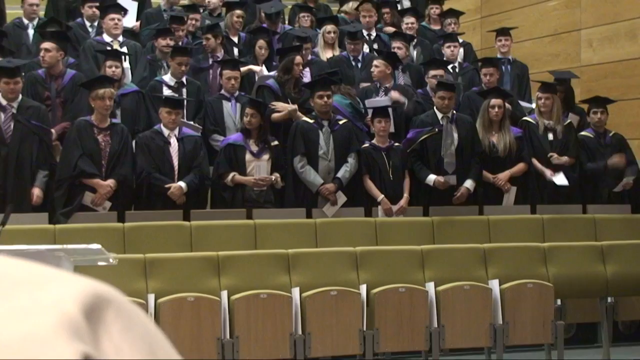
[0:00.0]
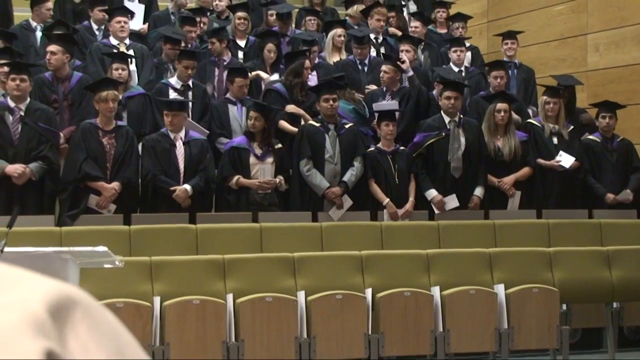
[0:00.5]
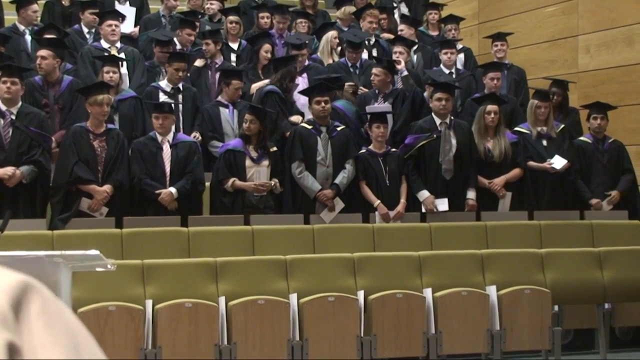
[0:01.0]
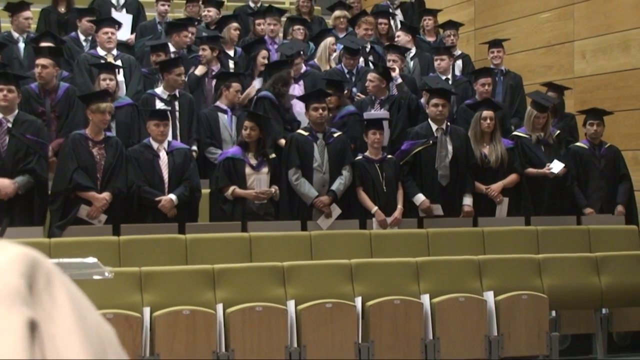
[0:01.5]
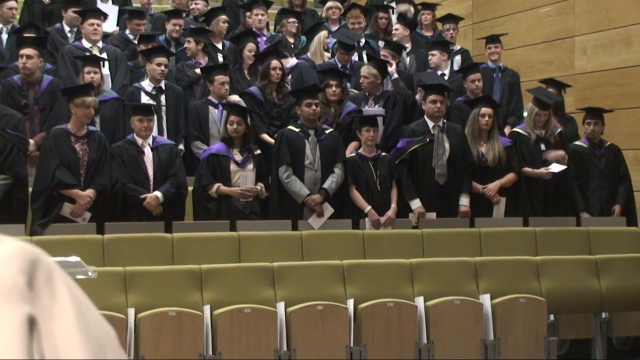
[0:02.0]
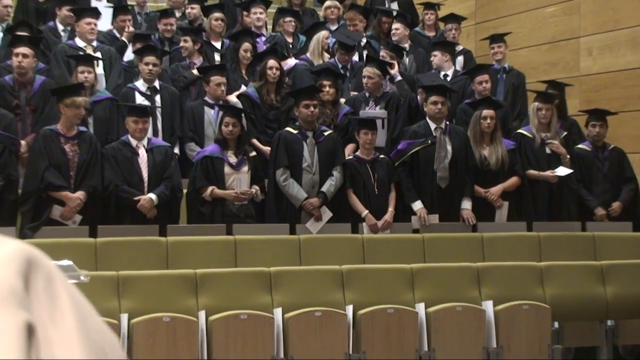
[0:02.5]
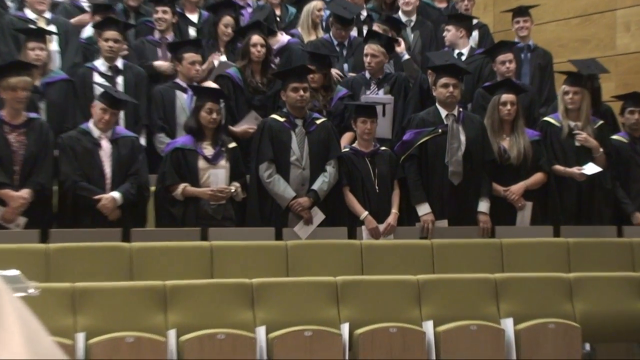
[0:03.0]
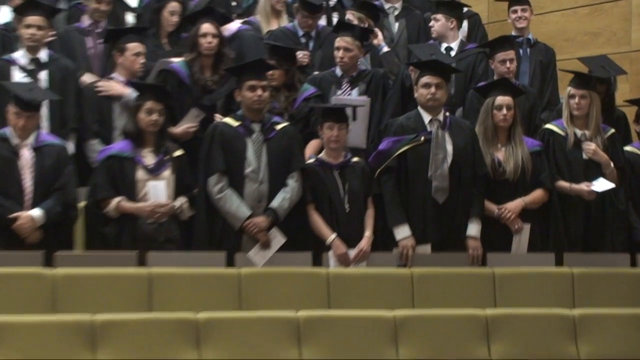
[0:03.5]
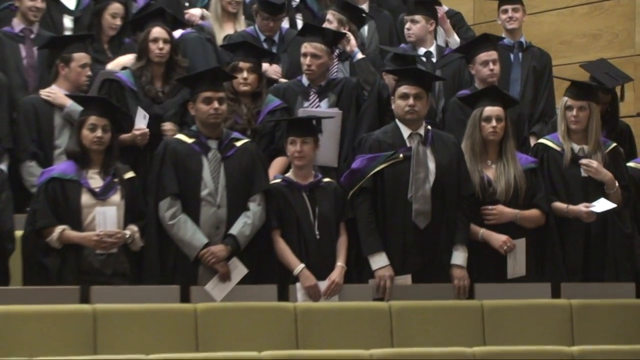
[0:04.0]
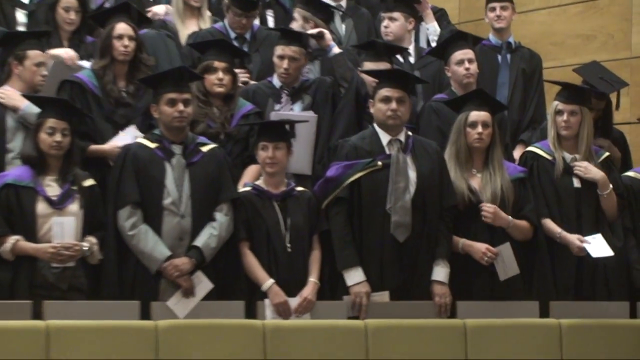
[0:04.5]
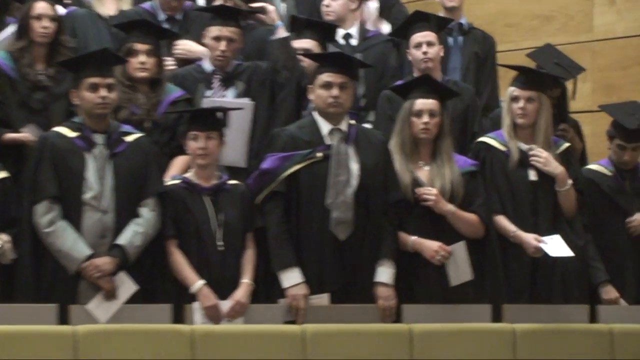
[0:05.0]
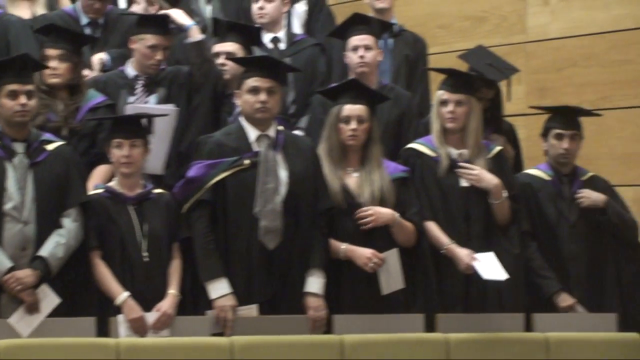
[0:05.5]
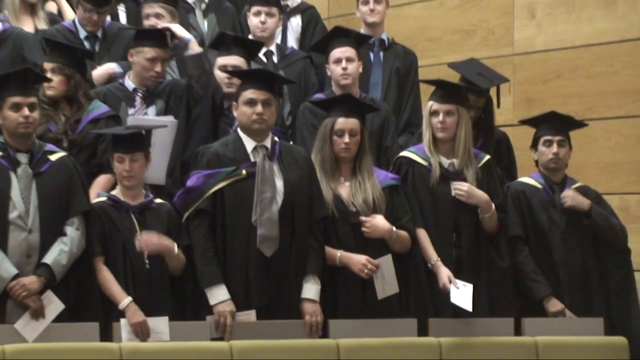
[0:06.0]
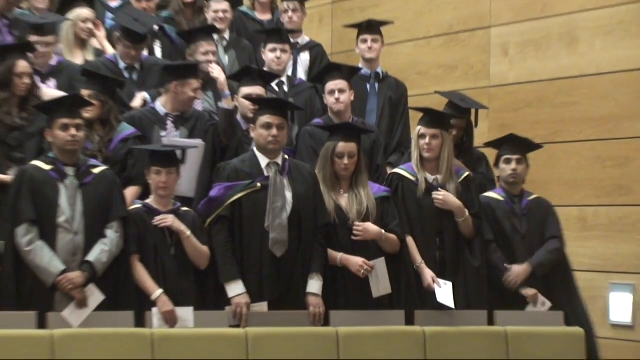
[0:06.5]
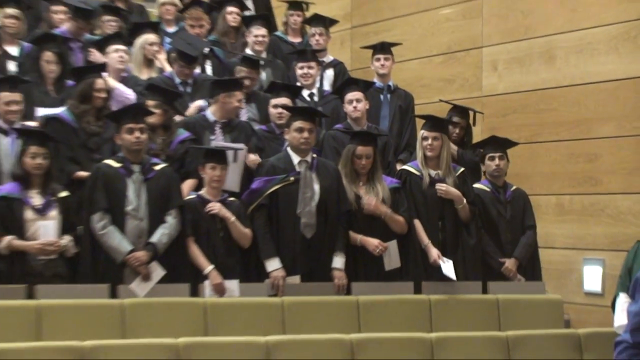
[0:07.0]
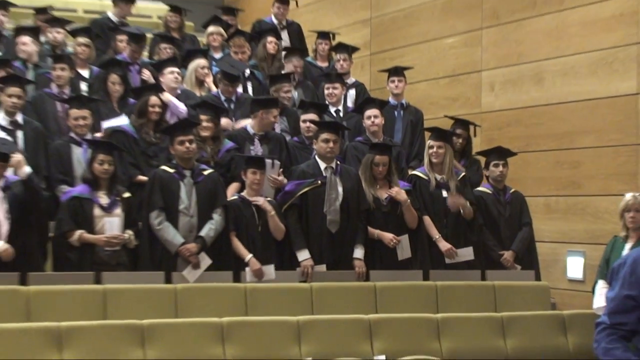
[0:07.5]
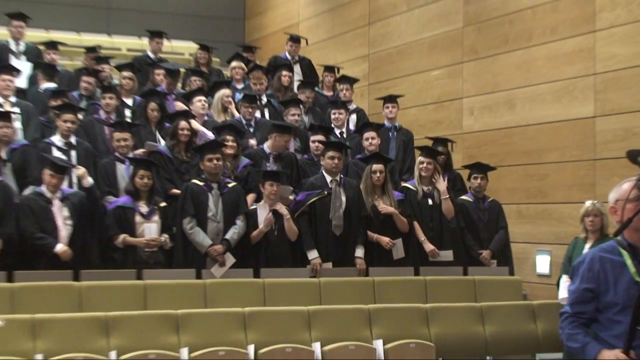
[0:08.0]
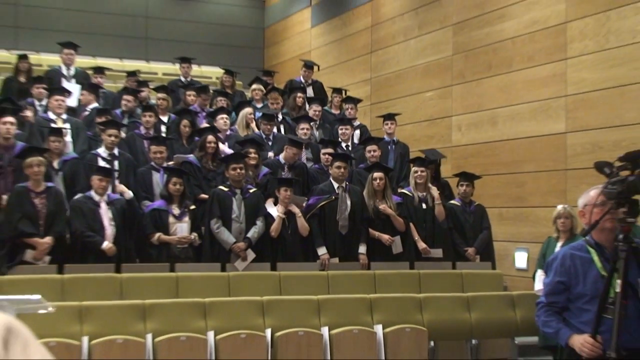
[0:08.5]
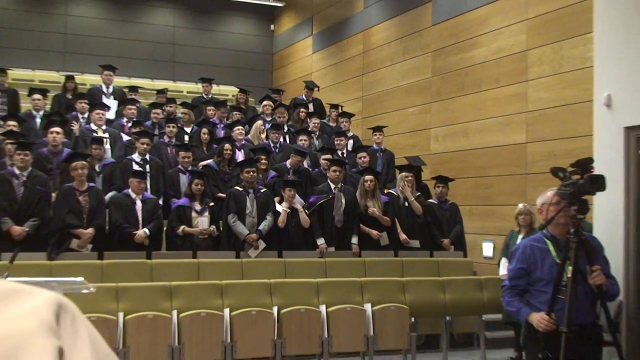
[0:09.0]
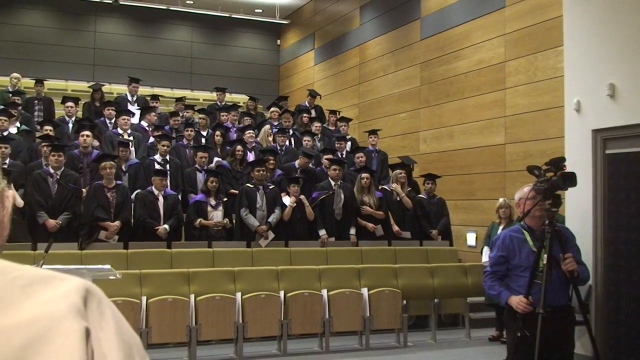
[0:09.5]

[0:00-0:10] A graduation takes place in what appears to be a large auditorium, one that almost looks like it might be a community college auditorium. Rows of green chairs and some wooden seats are visible. A number of graduates, maybe about 50 or perhaps a few fewer, wear black robes and mortarboards. Many of them seem to have something purple attached to their robes: some have a ribbon, and some have a sort of cape. The camera zooms out, revealing that it is actually a fairly small auditorium. It is still probably a community college; the graduates appear to be older, seemingly in their mid-30s and upward. There is a black slotted wall along the back and a wooden slotted wall along the right. On the right-hand side, a man in a blue button-up shirt and black pants is running a camera. The graduates are milling about, and most of them have a piece of paper in their hands. Many look somewhat nervous, not sour-faced but very solemn.